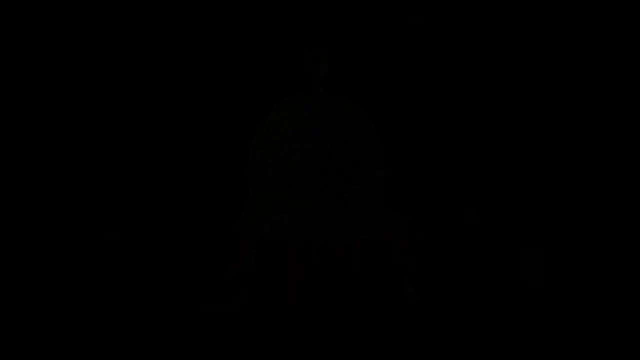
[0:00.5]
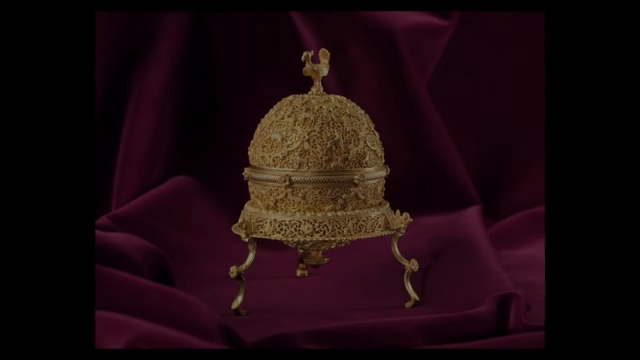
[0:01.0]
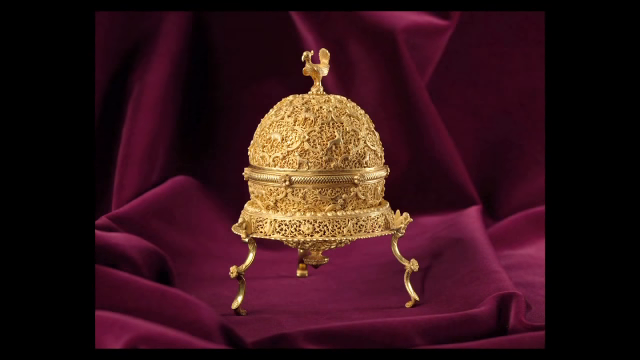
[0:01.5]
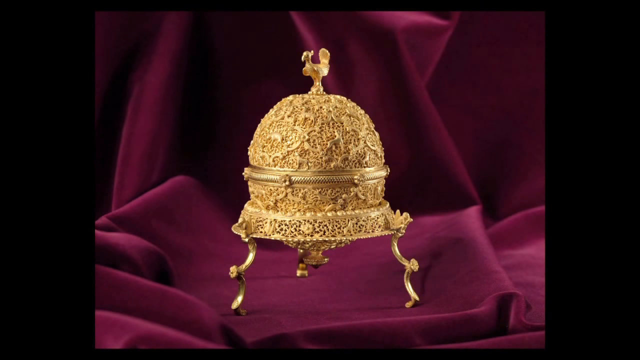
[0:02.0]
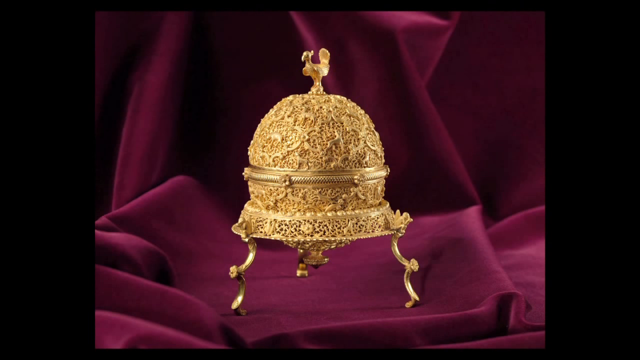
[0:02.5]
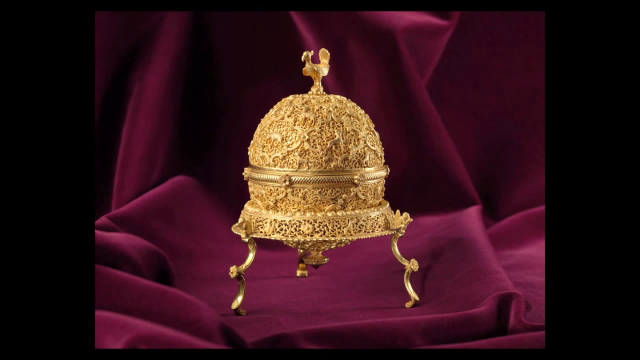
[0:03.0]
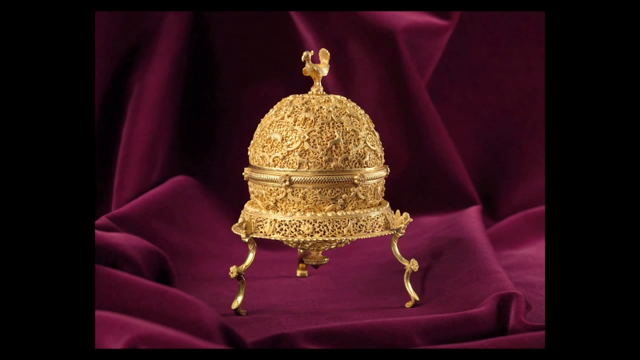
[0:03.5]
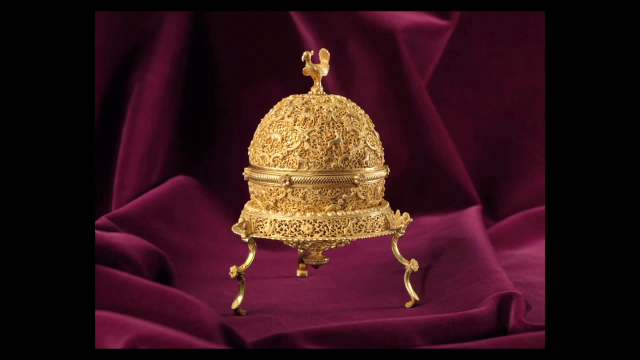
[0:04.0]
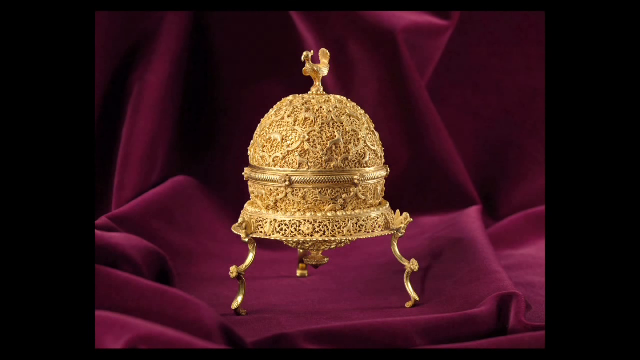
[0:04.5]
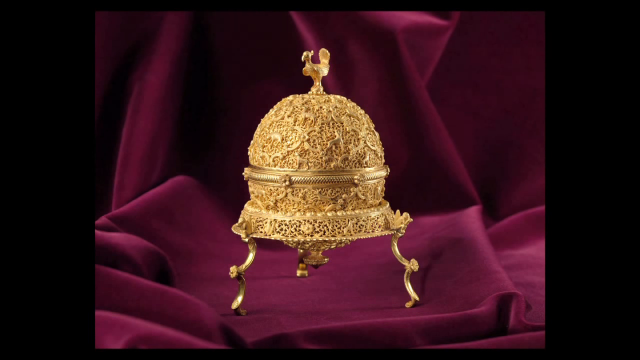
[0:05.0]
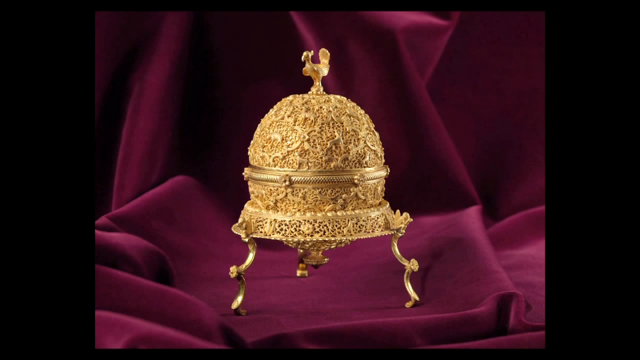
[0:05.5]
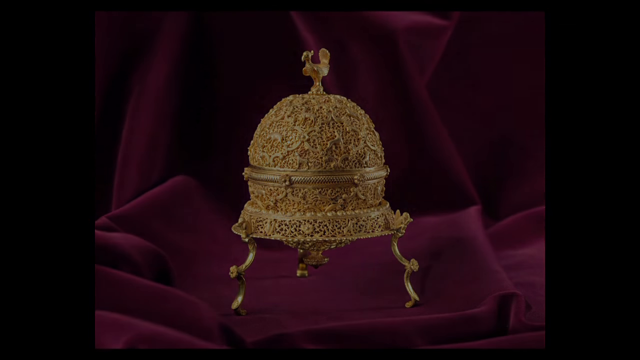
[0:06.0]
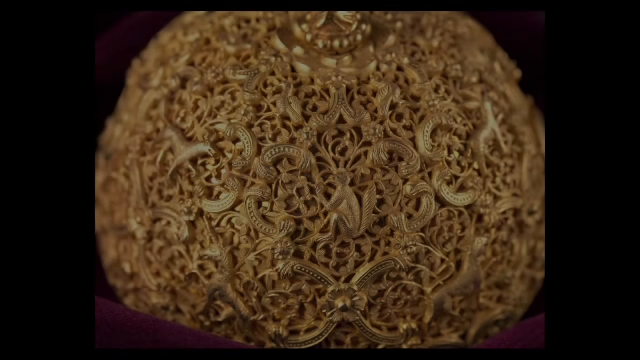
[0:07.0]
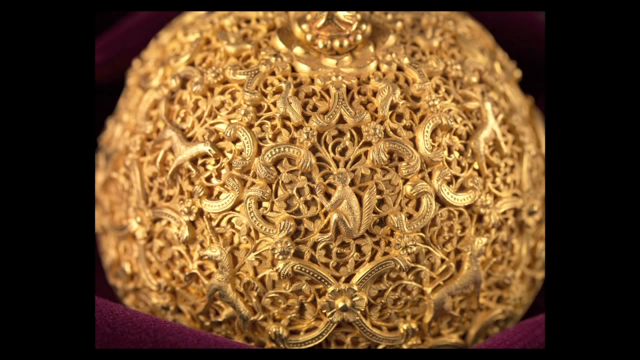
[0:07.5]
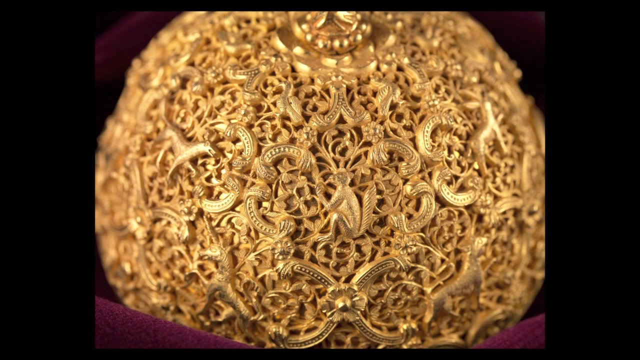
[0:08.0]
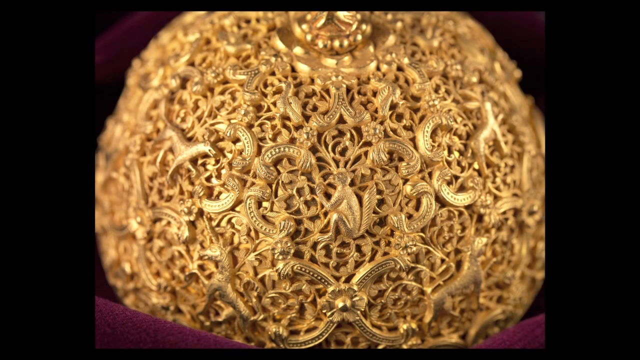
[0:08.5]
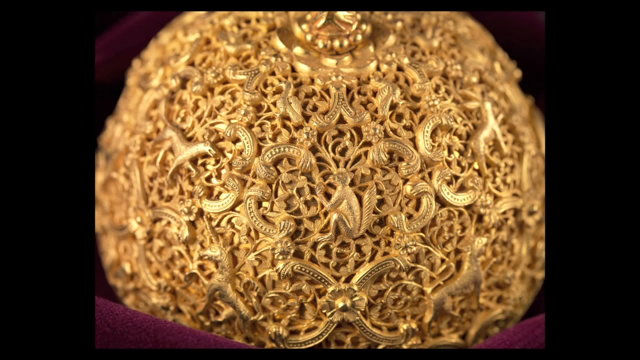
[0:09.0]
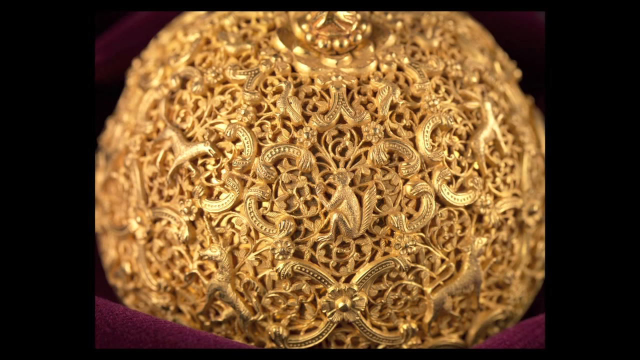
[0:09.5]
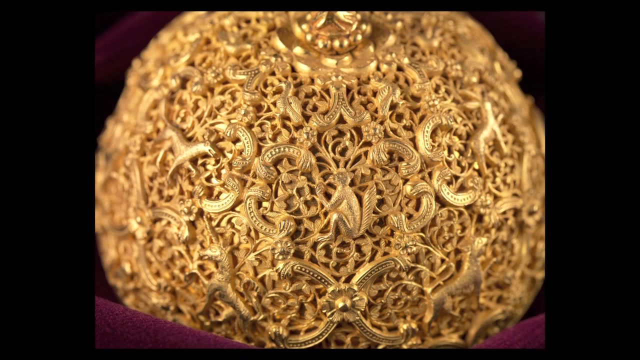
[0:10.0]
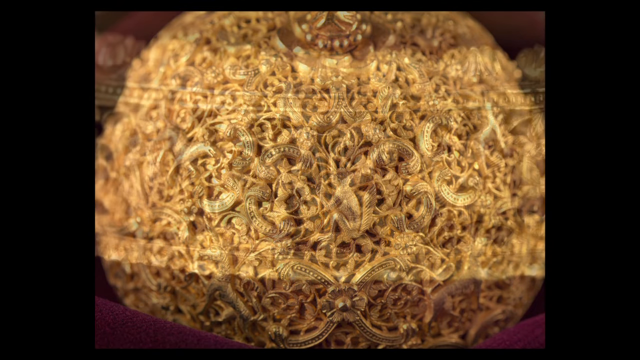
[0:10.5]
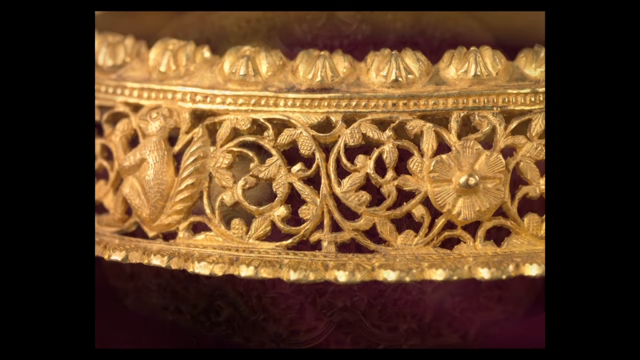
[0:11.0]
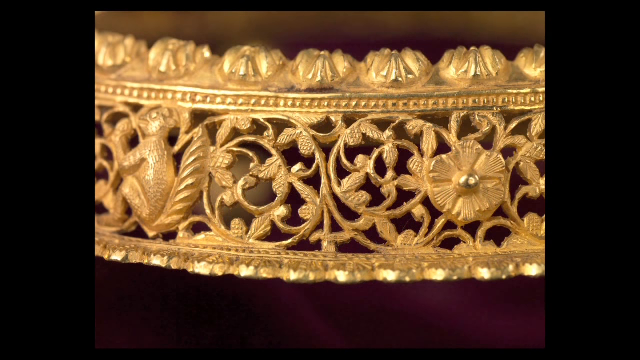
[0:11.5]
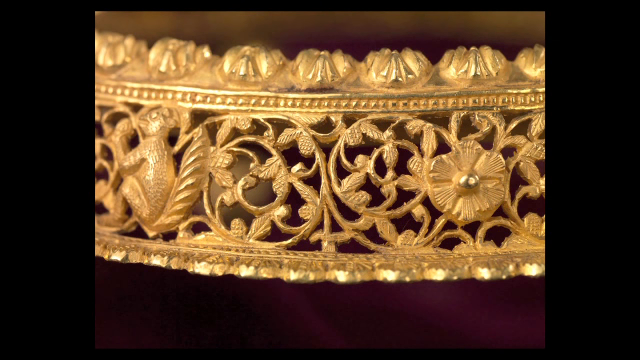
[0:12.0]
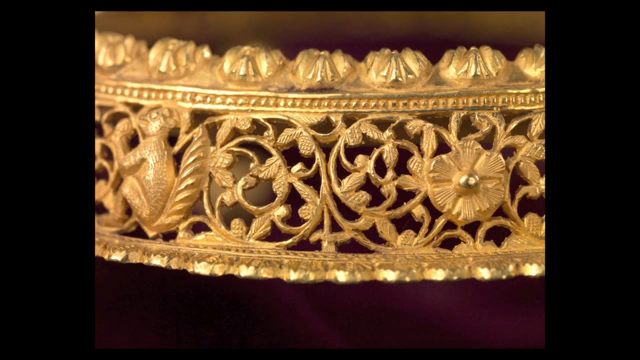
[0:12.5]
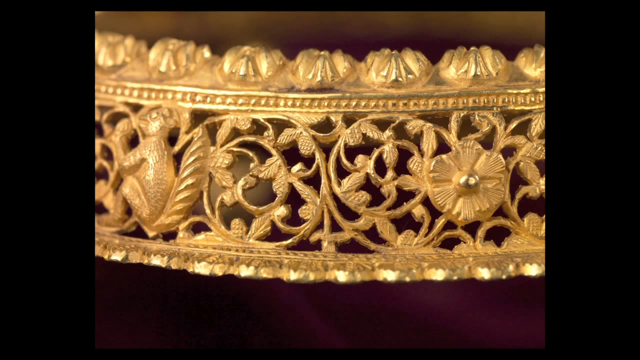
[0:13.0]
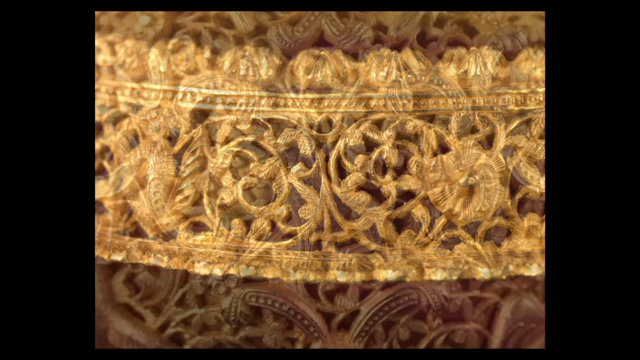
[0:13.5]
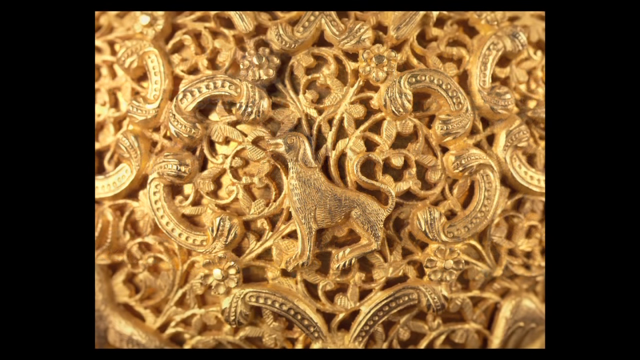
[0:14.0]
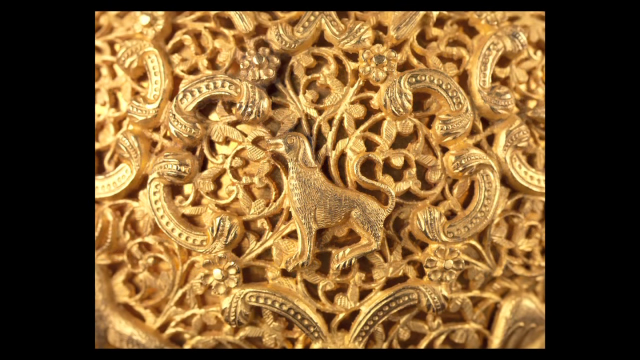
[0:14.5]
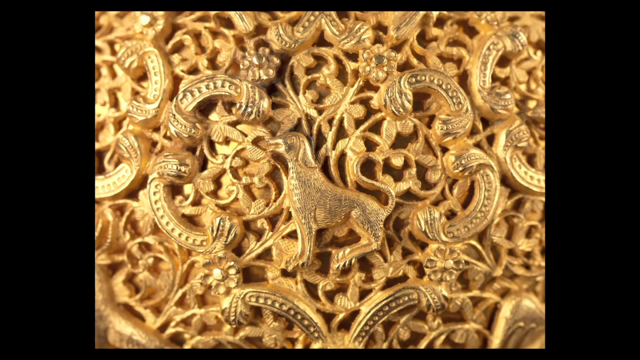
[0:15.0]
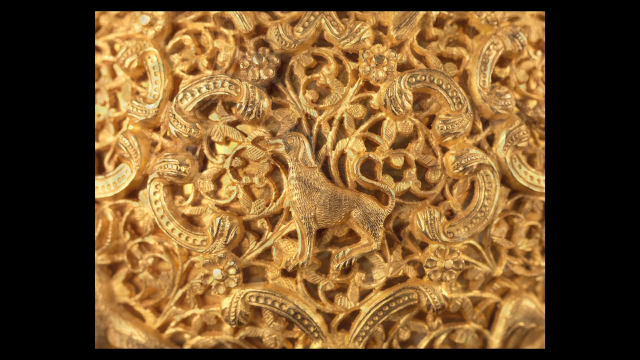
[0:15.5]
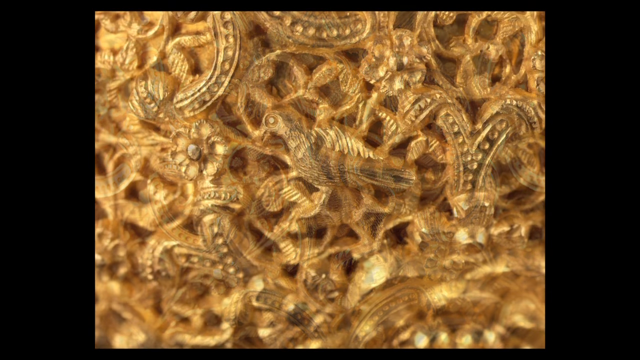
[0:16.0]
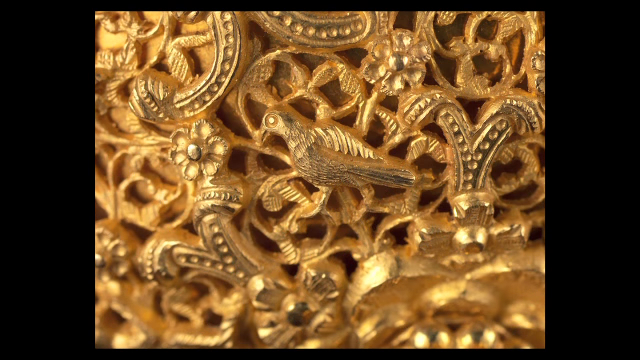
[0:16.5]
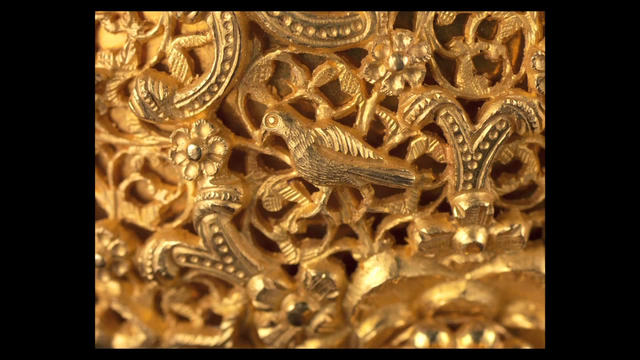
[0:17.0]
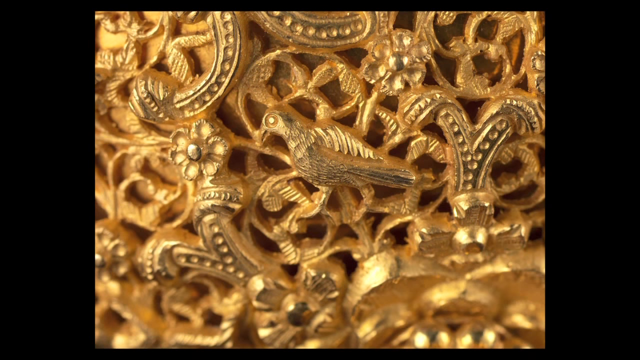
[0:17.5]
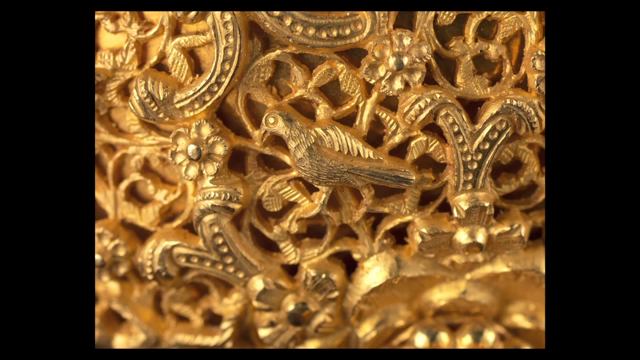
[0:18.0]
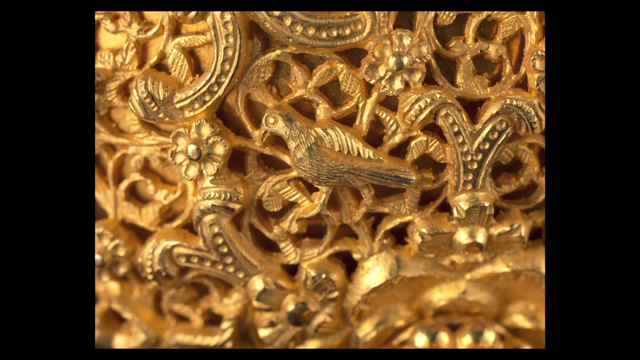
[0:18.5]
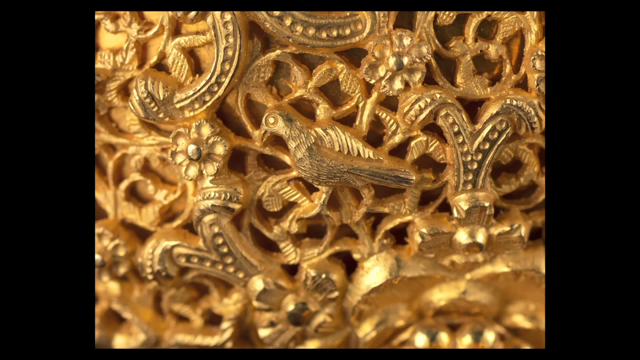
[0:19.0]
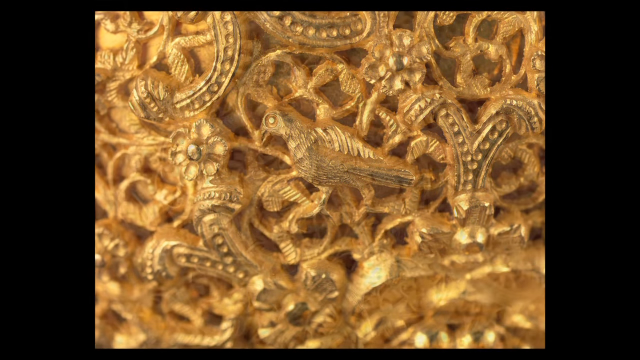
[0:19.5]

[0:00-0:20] At the beginning, a golden type of jewel is standing on a maroon blanket. Different angles then show the details of the jewel: the first has circle-type patterns, the second shows leaves, and the last shows an animal on the jewel. It seems to be very expensive, as it is covered in gold. Different animals, such as horses, dogs and birds, can also be seen on it. The different camera angles give a closer look at the patterns.